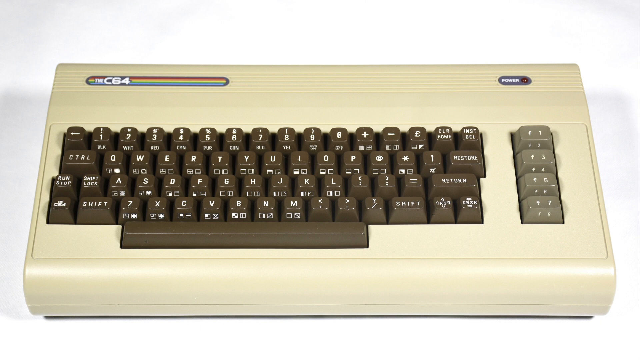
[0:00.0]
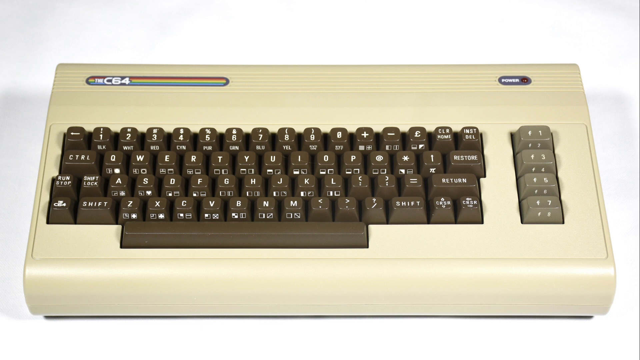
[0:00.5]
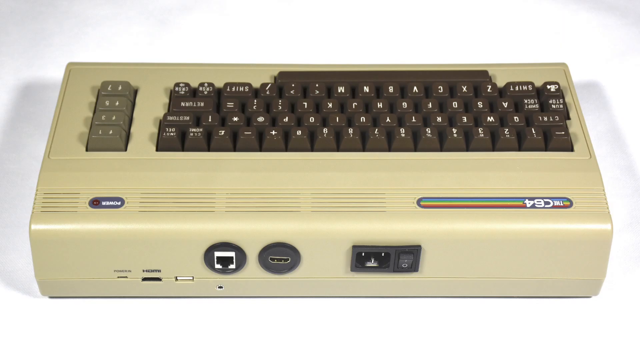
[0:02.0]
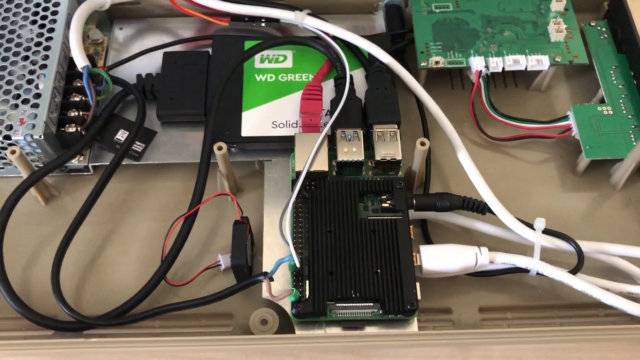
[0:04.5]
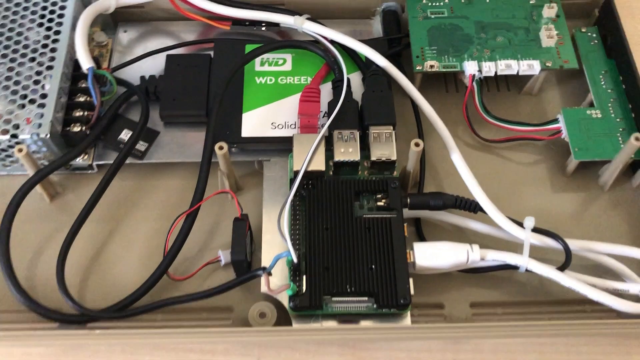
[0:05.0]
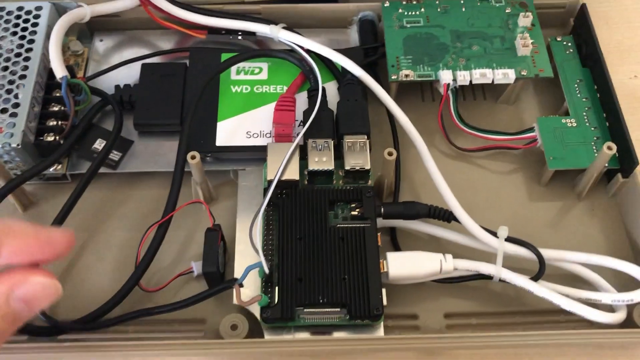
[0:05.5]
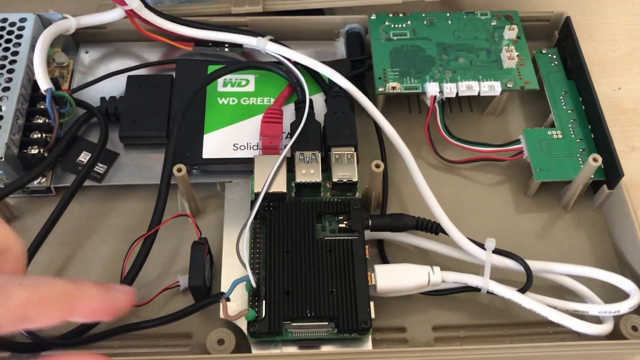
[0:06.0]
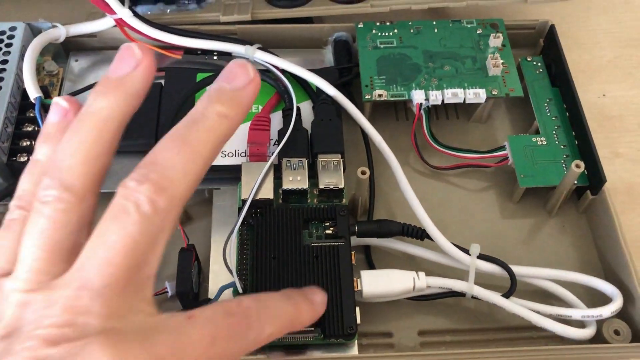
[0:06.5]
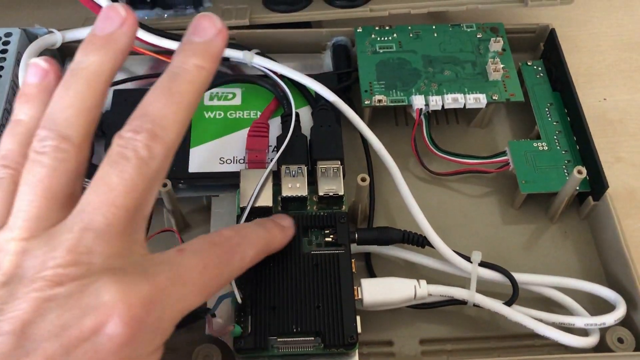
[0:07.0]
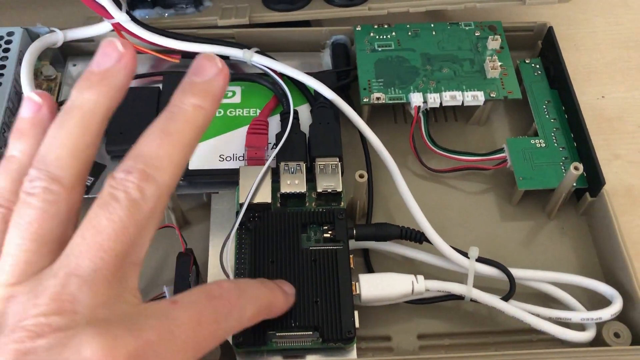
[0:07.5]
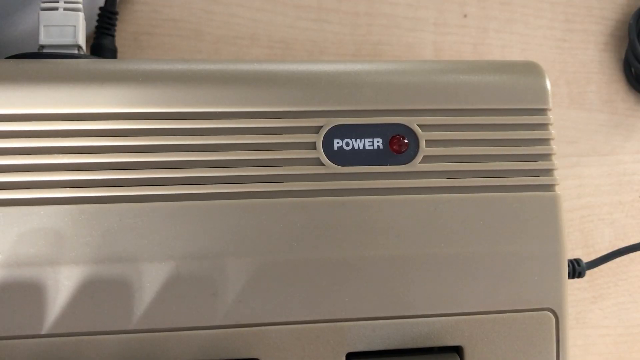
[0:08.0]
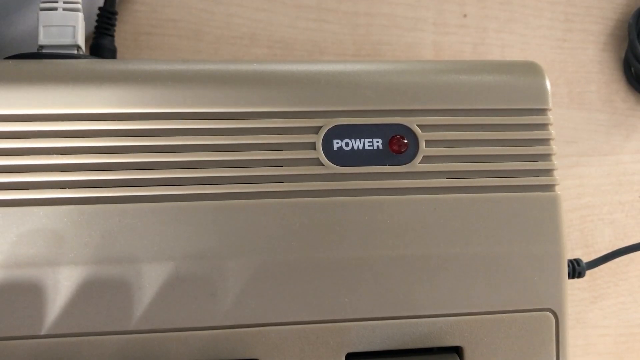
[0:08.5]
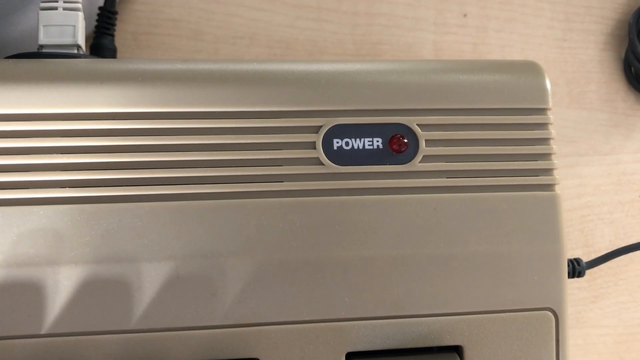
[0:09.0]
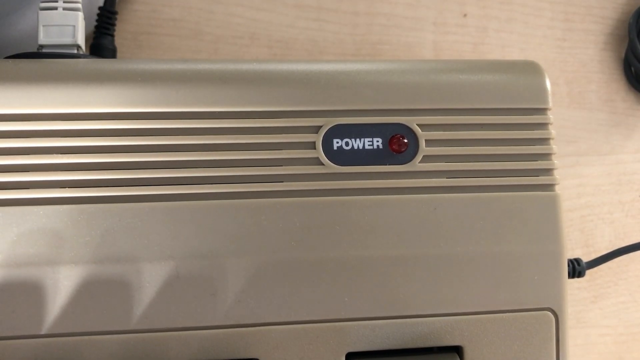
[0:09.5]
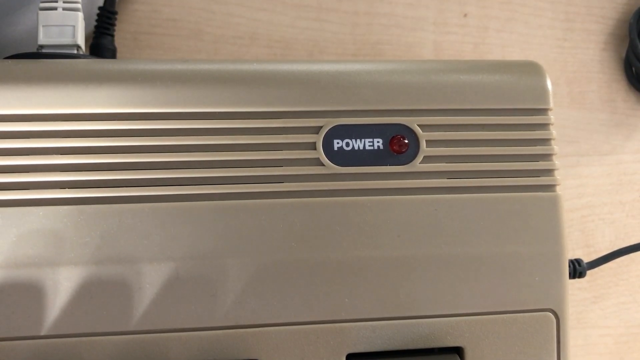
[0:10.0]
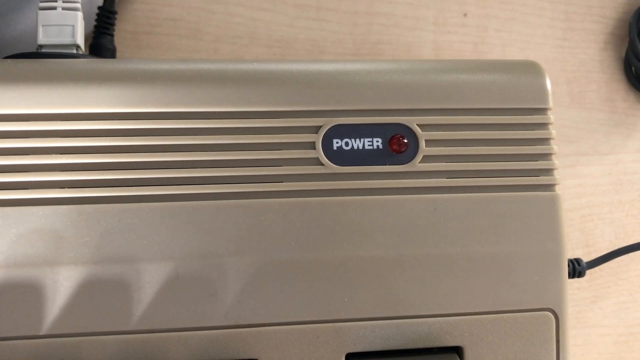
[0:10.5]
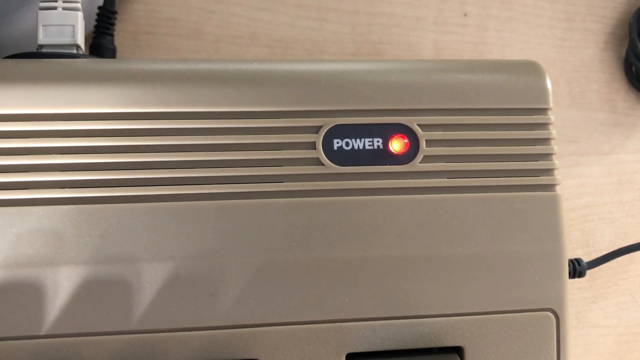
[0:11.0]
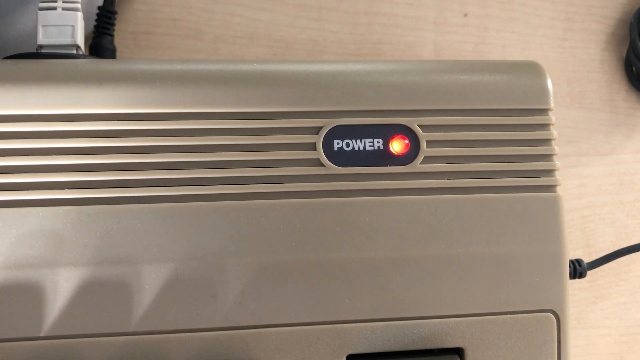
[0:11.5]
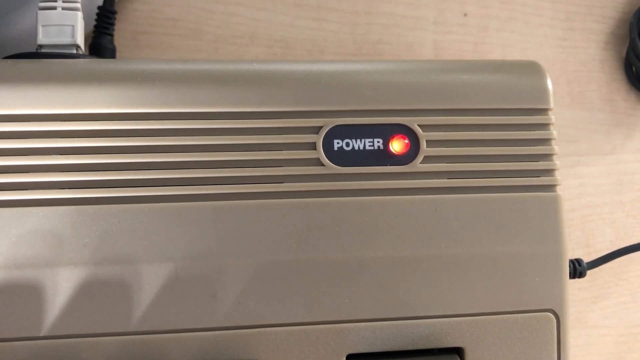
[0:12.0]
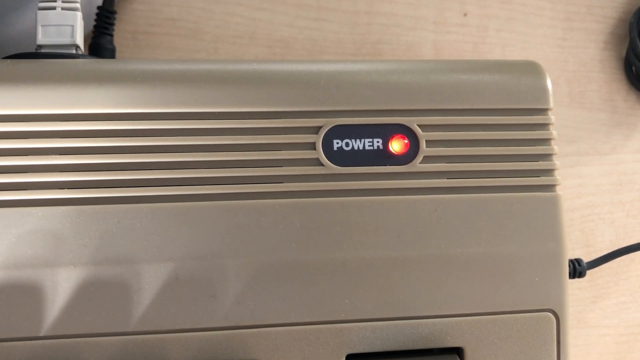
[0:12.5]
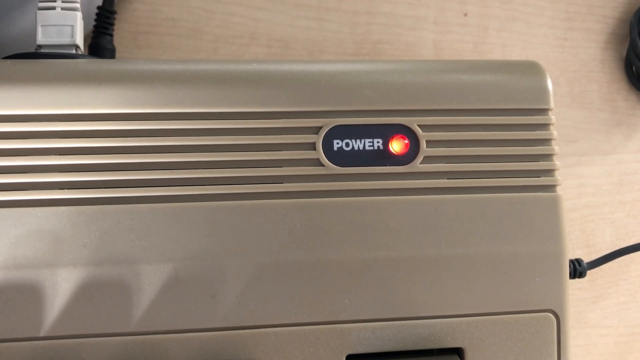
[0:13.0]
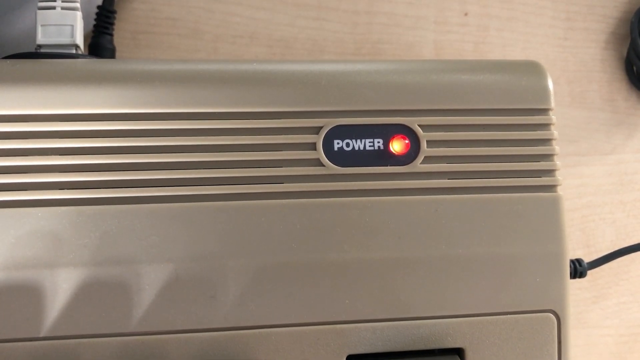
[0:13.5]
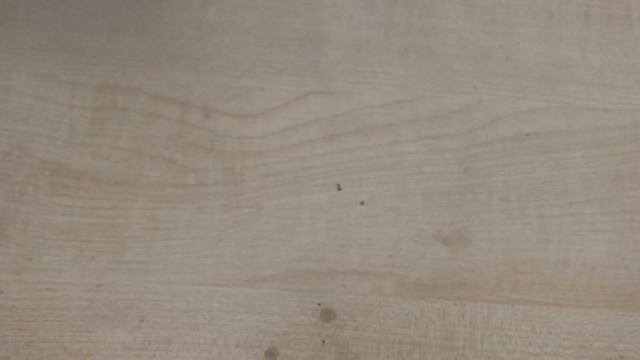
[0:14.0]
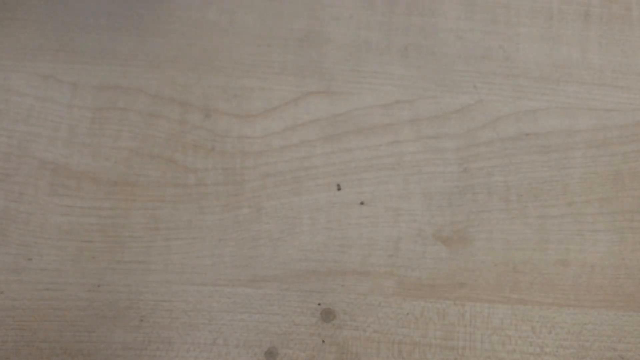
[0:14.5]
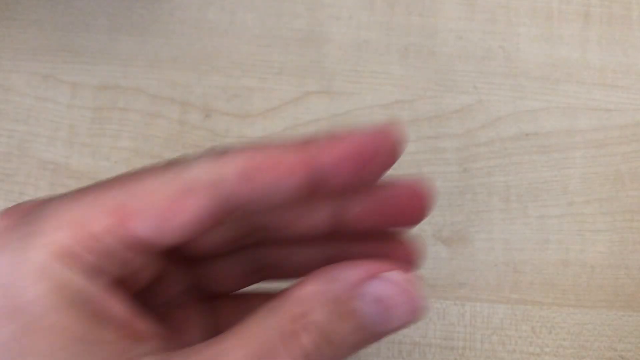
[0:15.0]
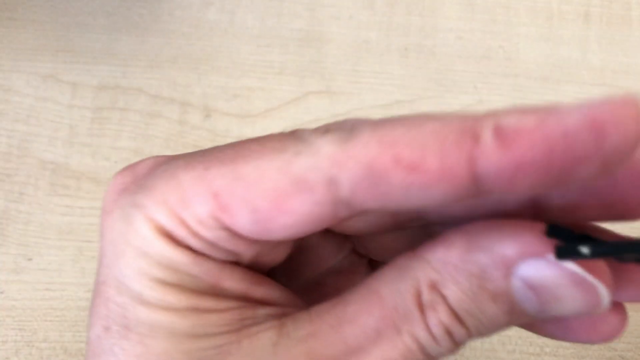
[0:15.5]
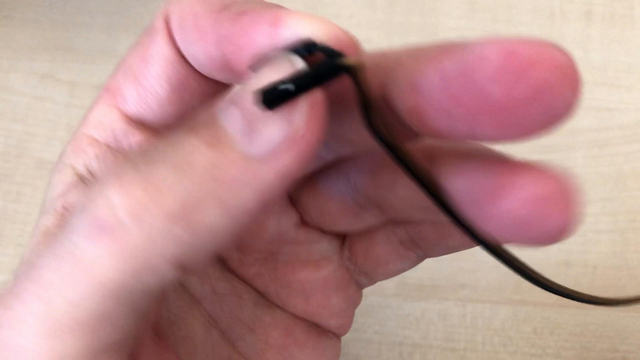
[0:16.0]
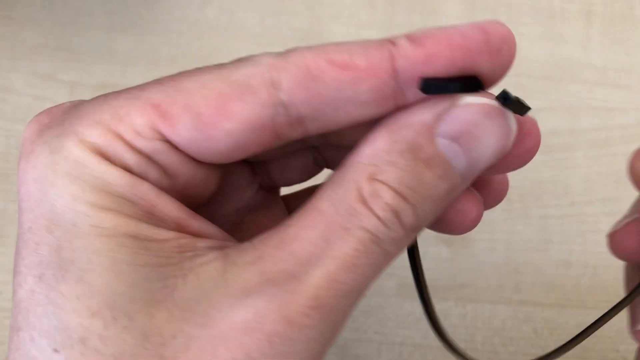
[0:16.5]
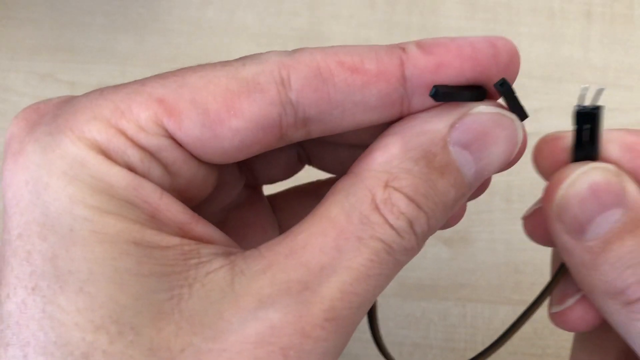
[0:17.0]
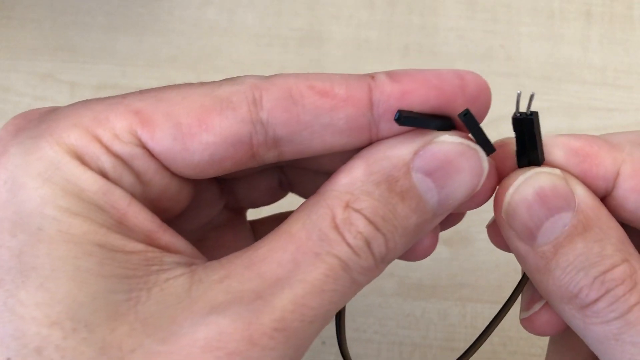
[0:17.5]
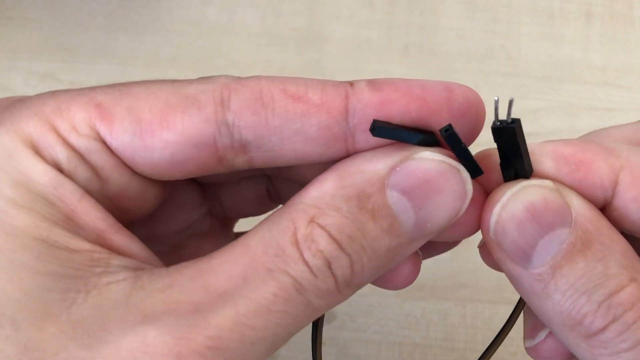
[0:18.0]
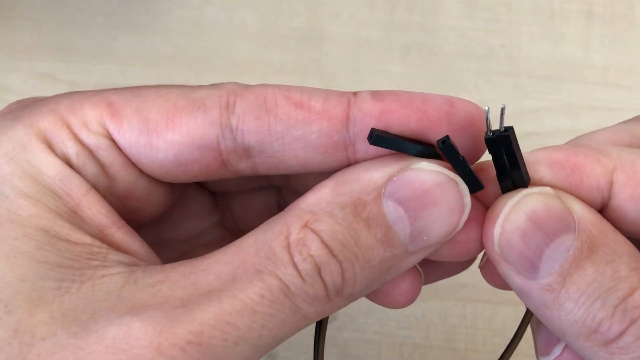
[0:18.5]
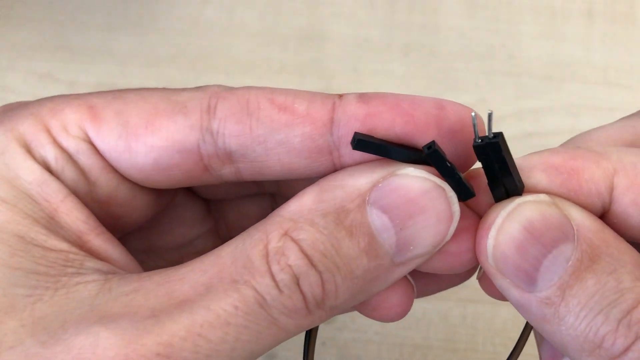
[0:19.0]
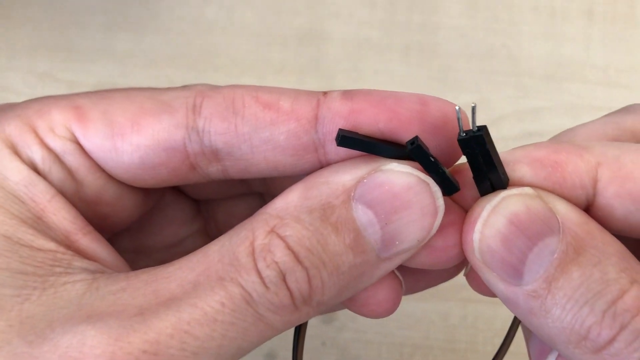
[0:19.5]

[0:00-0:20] A beige computer keyboard has a "C64" label on the upper left-hand side, with an oval, rainbow-colored tag also in the upper left-hand corner, and a power light on the upper right-hand corner. It is a vintage, 1980s-style keyboard with a beige body and dark brown keys. The view moves to the back side, where there is a place to insert a power cord and a power on/off switch in the middle. To the left of that is a USB port, and to the left of that an Ethernet jack; further left there appear to be three other, unidentifiable ports. Next, the keyboard's cover is taken off to show the interior, and a hand points out something inside. There looks to be a solid state drive inside the keyboard, so it is a modern machine meant to look vintage. A close-up shows the dark gray power light with "power" in white; the power is turned on and a red light comes on. Then there is a close-up of someone holding a piece of black wire with both hands.